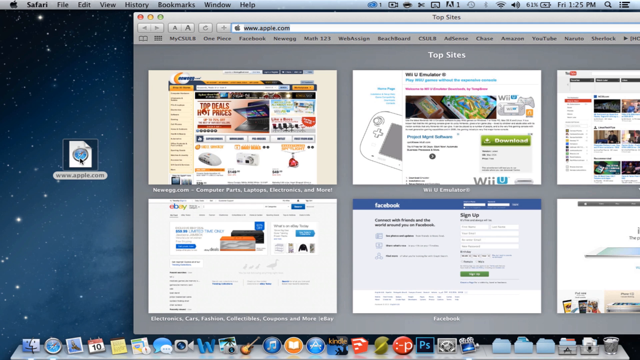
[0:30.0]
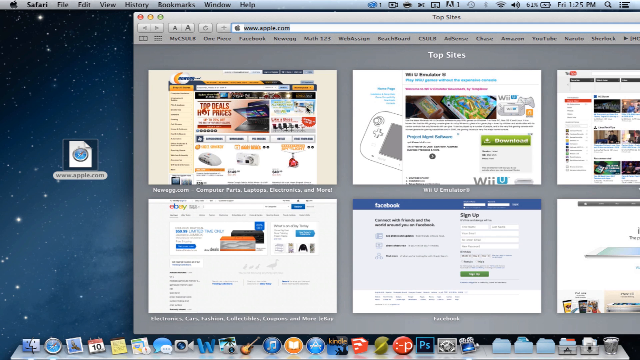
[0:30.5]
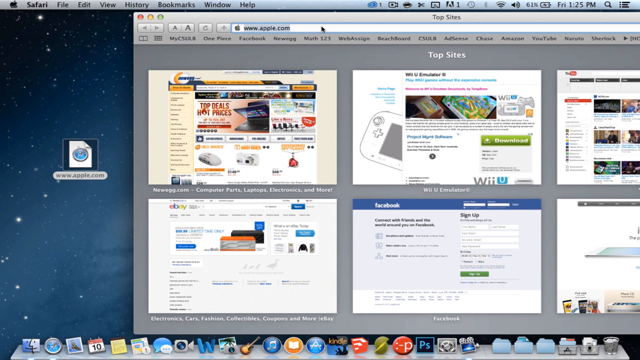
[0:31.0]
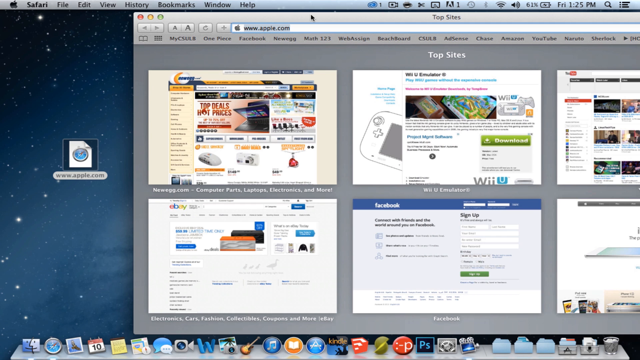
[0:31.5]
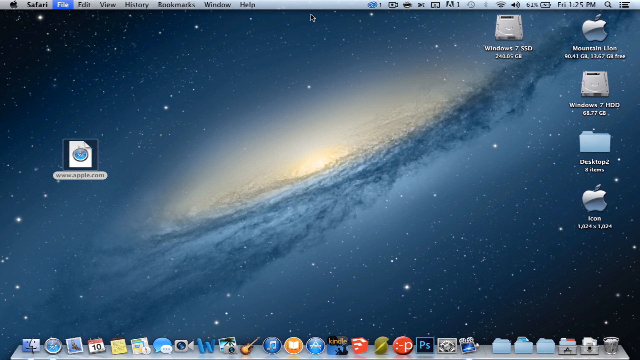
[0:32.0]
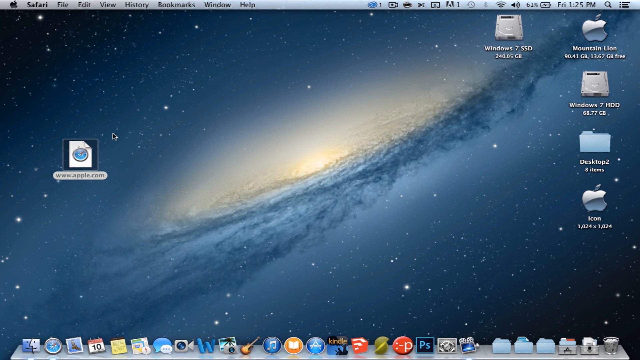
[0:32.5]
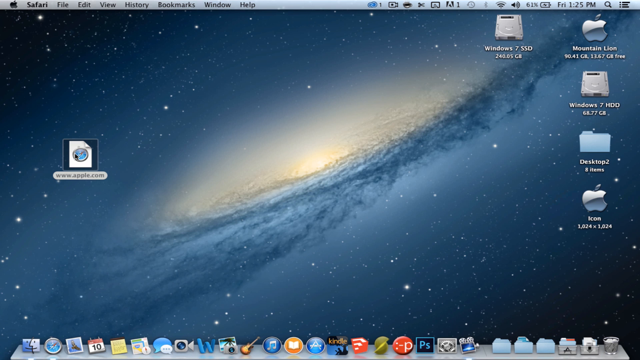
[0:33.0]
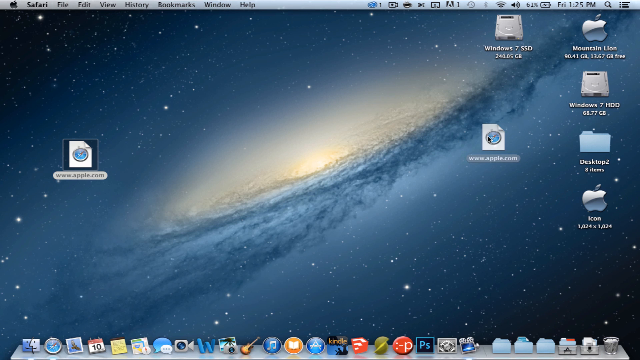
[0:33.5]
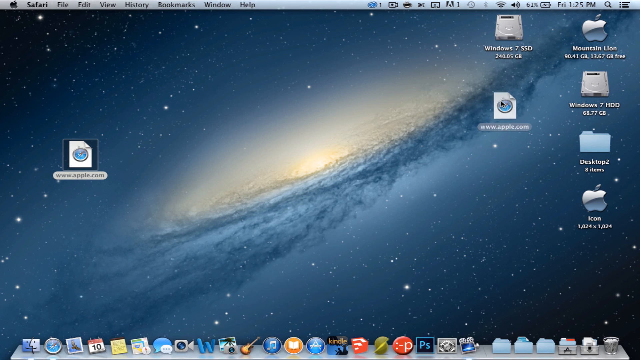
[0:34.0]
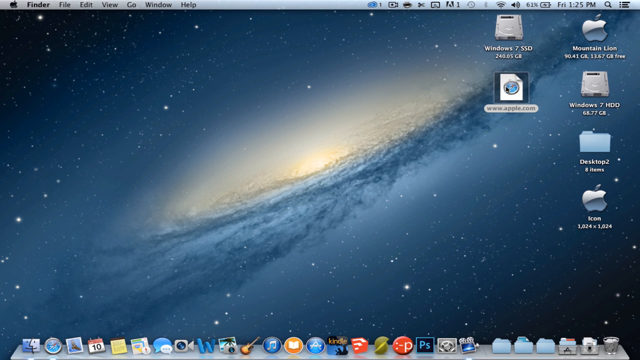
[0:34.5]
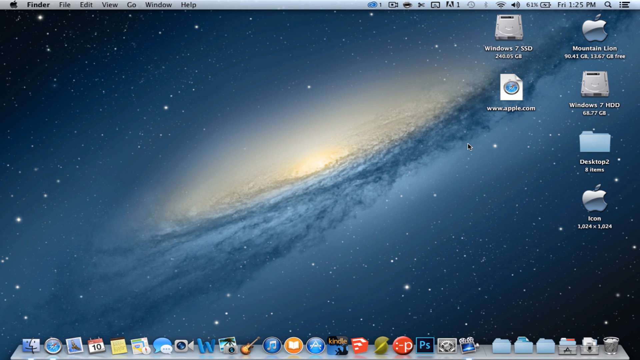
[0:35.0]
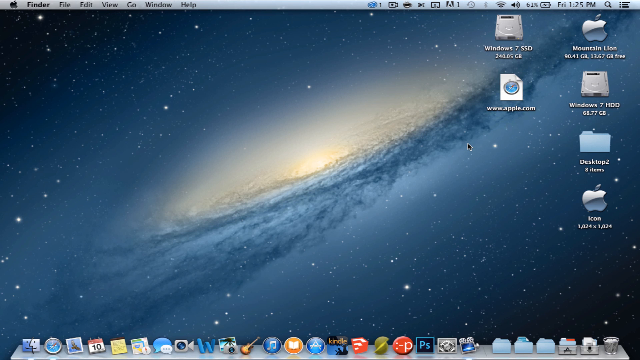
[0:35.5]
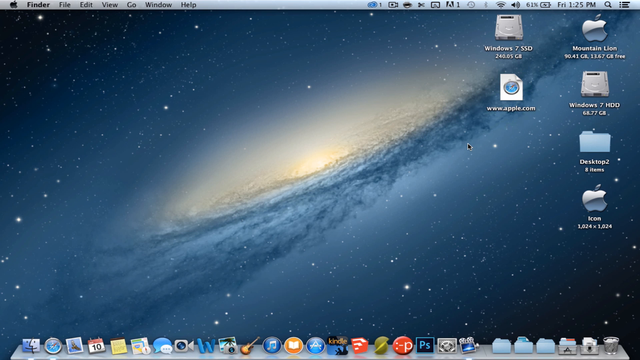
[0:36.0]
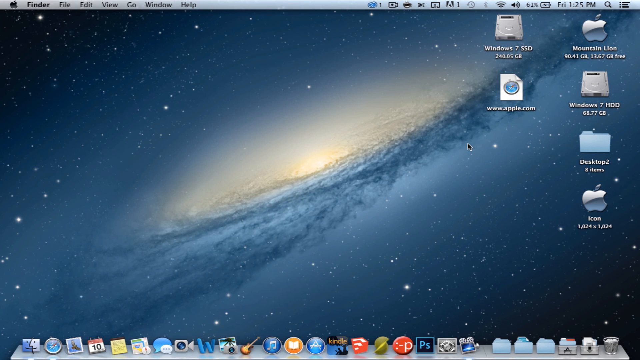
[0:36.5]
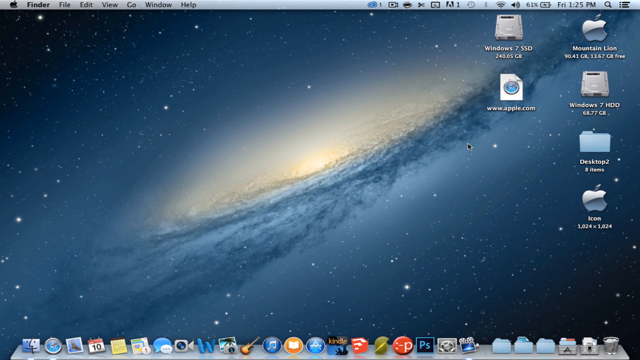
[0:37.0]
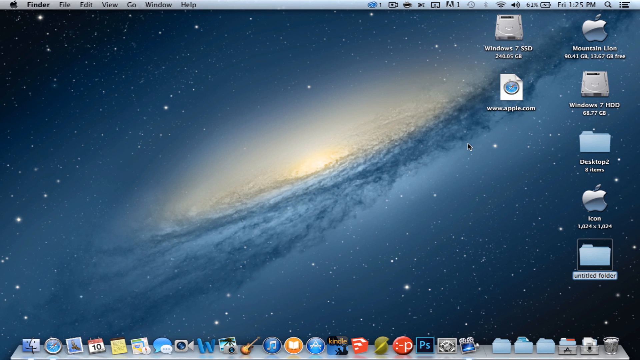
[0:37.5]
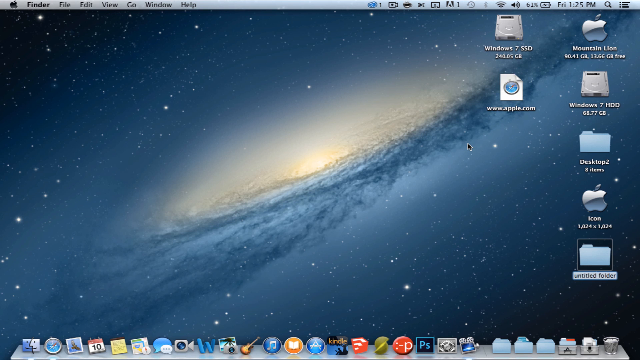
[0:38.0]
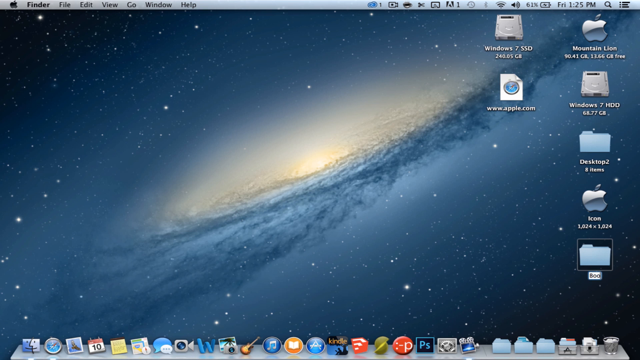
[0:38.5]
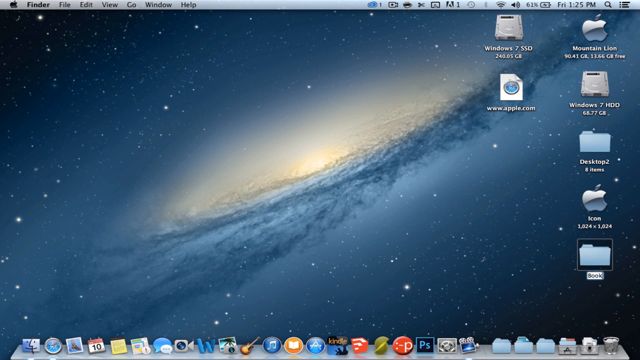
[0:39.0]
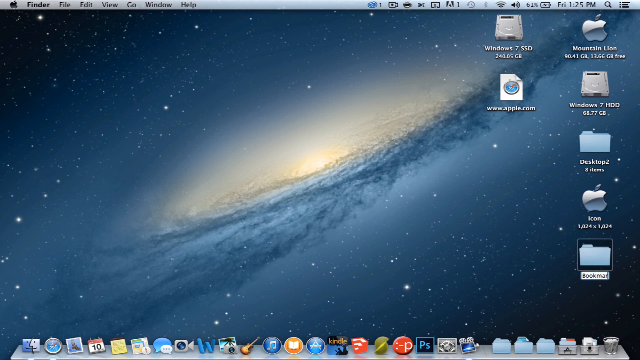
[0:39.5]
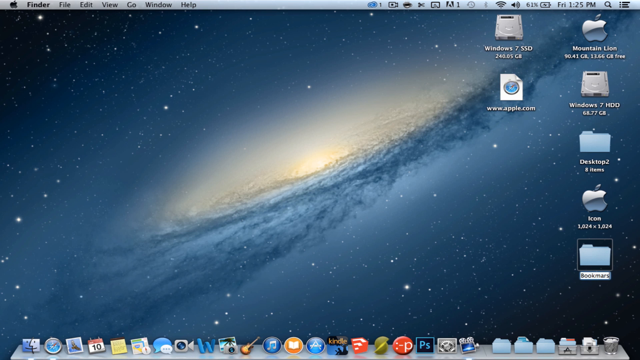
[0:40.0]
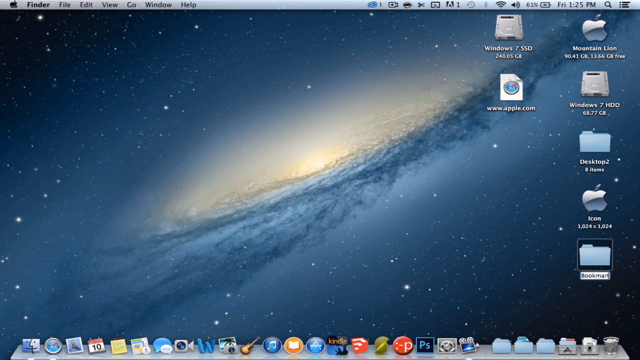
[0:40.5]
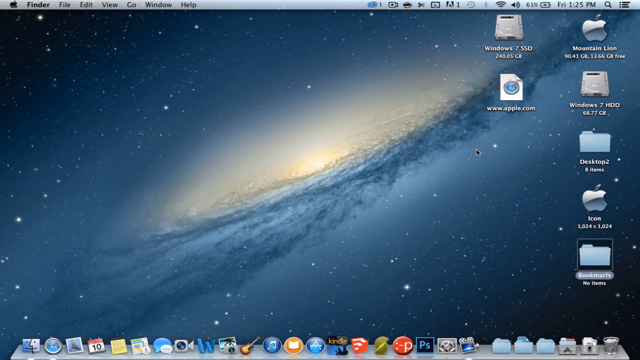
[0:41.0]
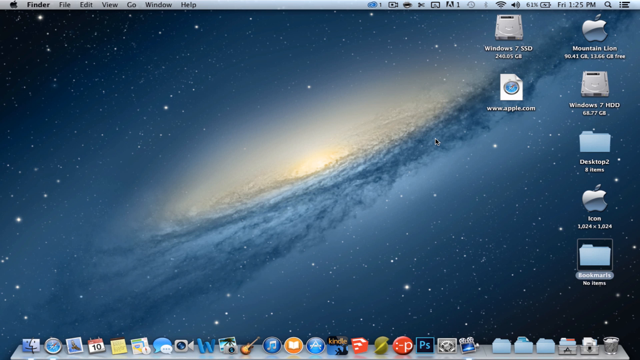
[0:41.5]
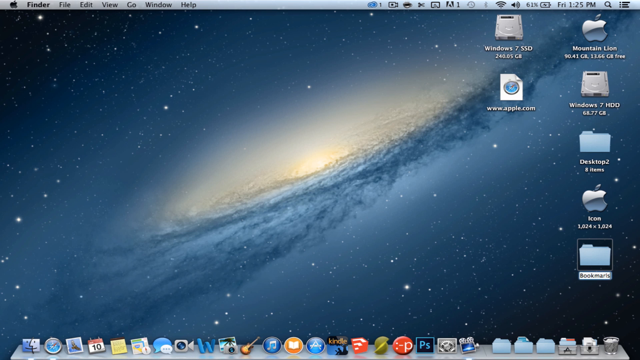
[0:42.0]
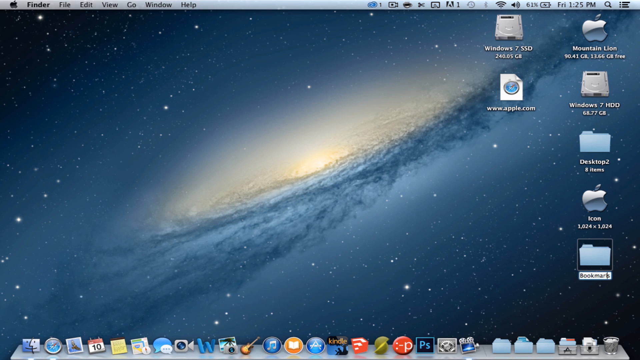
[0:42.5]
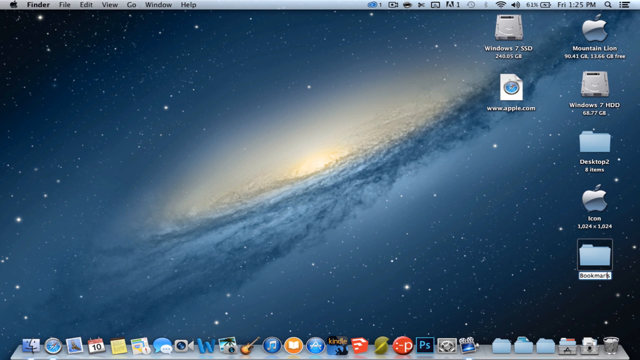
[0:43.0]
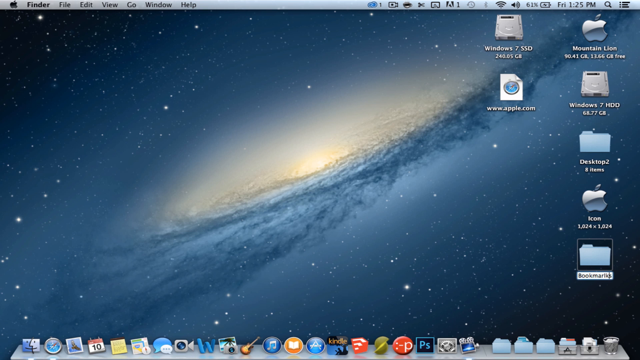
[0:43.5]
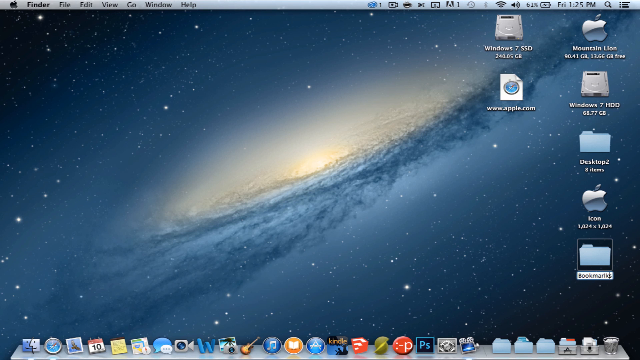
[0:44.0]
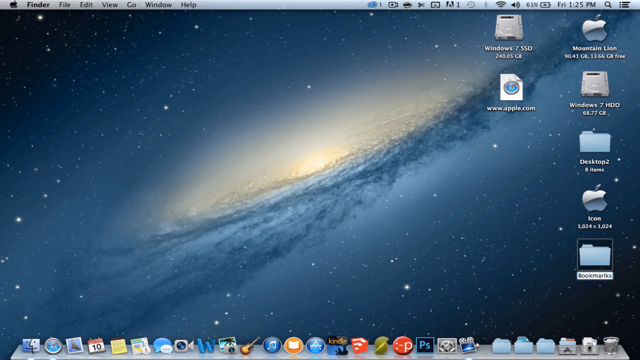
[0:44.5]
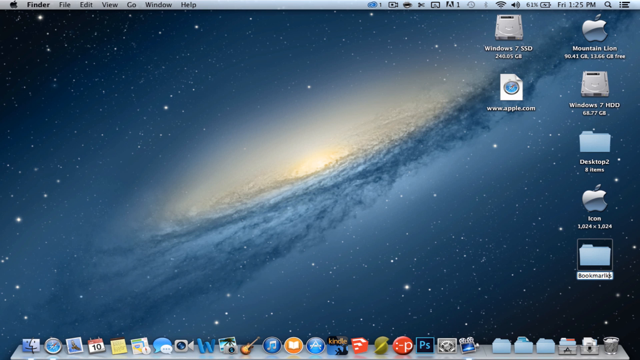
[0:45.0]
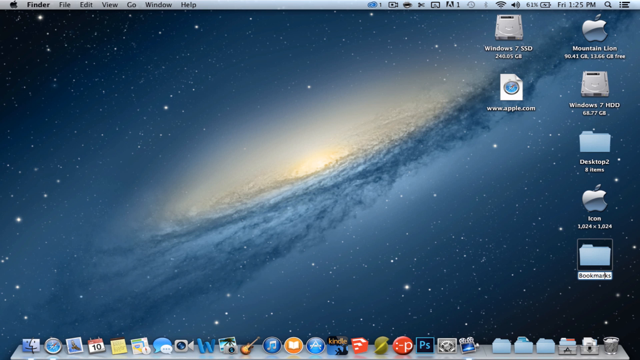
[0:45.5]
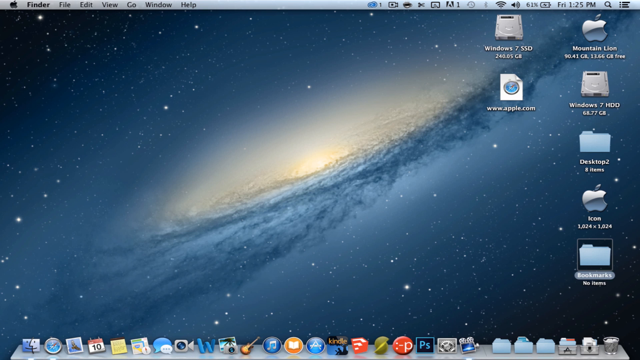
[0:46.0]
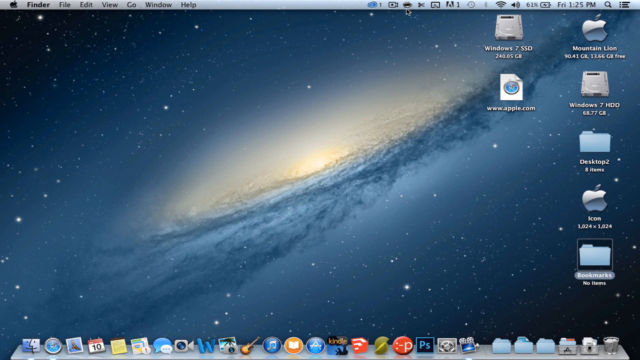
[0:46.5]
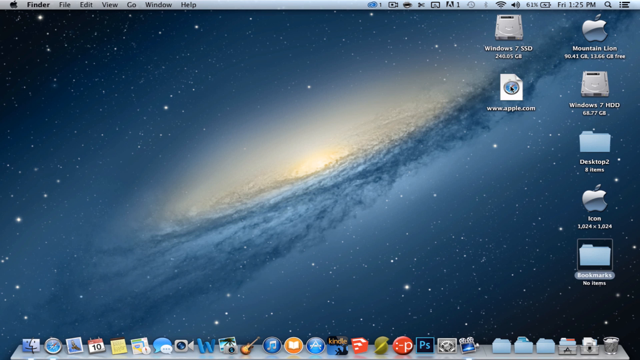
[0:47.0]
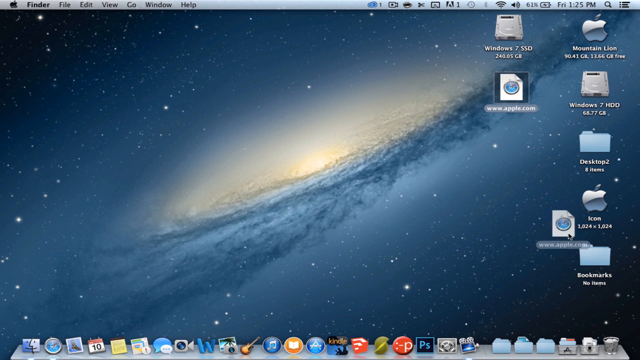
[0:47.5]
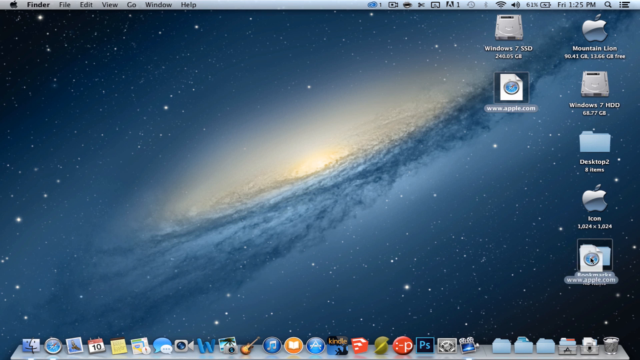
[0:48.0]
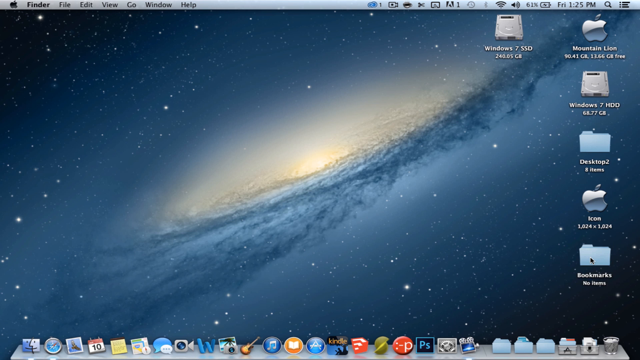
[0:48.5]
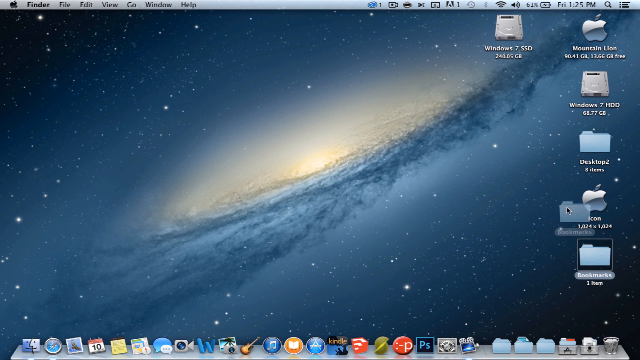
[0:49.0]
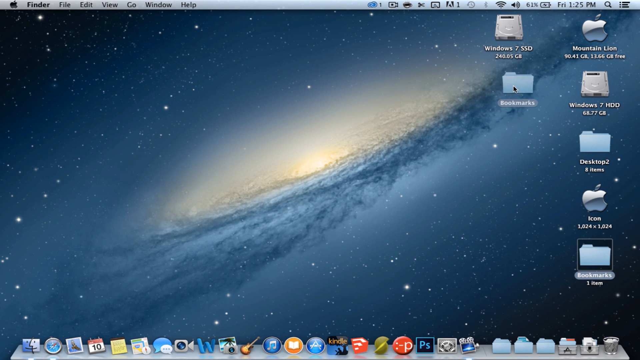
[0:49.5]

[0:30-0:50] The user closes Safari and moves the cursor to the newly created Apple.com shortcut on the desktop, dragging it to just beneath the existing desktop icons, under the one labeled "Windows 7". Shortly after, a new folder appears in the bottom right corner of the screen with the default name "Untitled Folder". The user clicks the folder name, renames it "Bookmarks" and presses Enter to save it. They return to the Apple.com shortcut below the Windows 7 folder and drag it into the new Bookmarks folder. With the shortcut inside, the user drags the whole Bookmarks folder to directly beneath the Windows 7 folder.